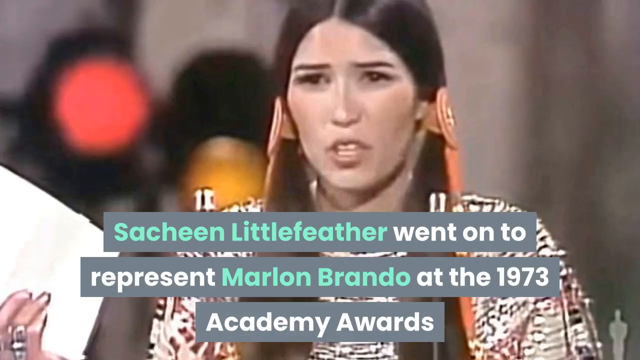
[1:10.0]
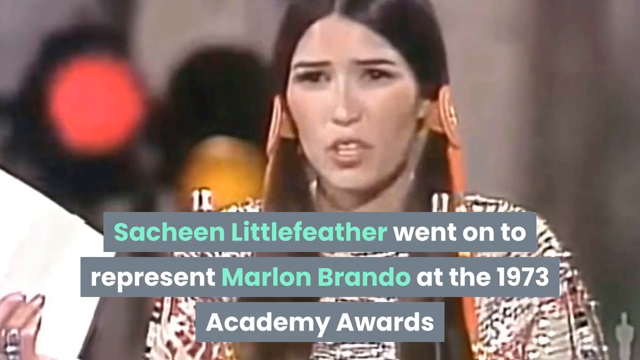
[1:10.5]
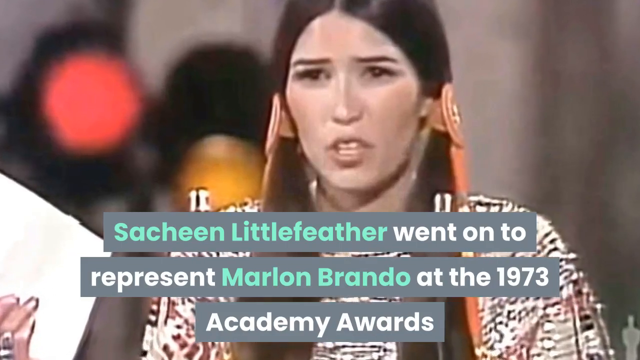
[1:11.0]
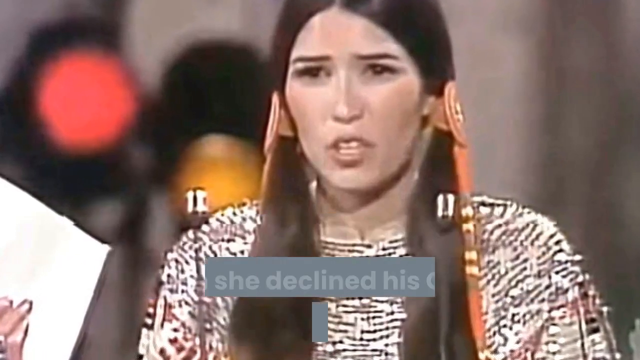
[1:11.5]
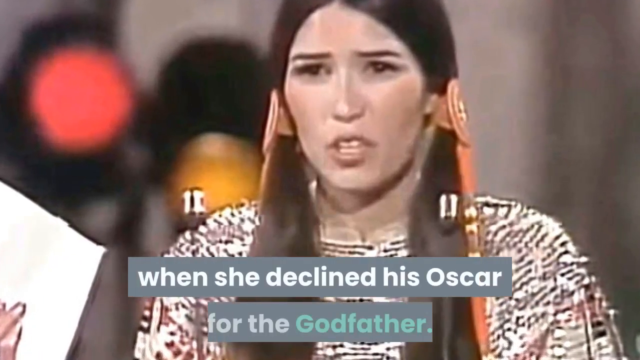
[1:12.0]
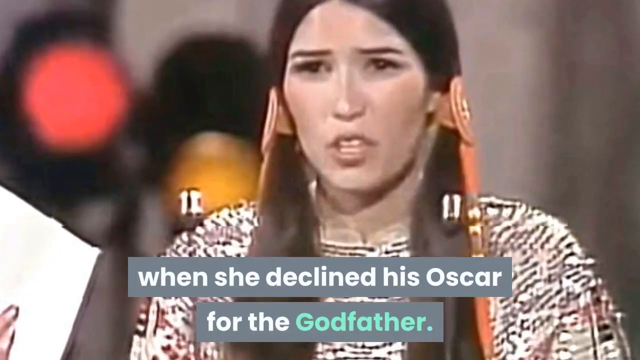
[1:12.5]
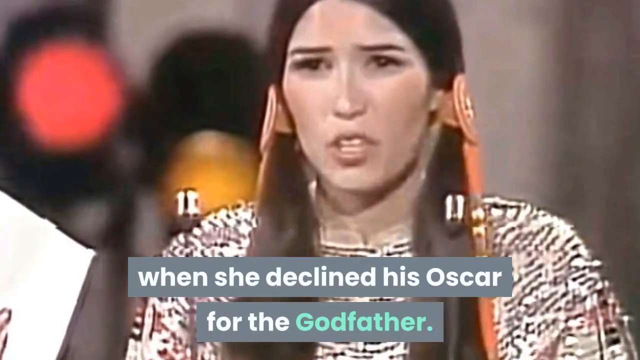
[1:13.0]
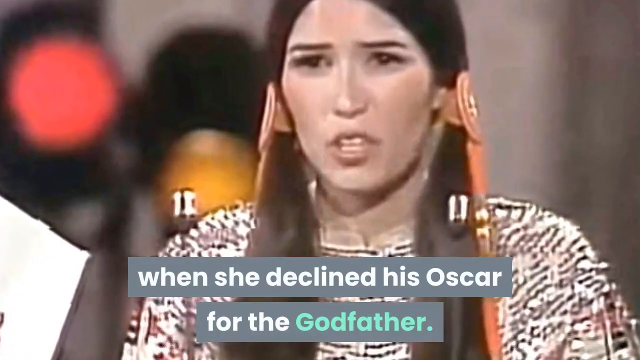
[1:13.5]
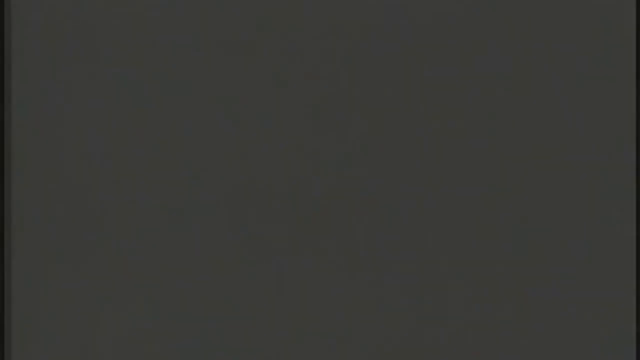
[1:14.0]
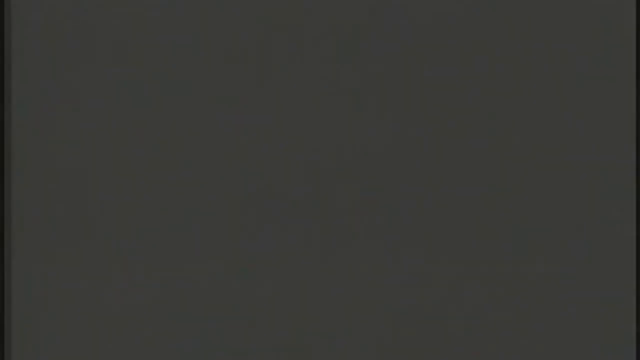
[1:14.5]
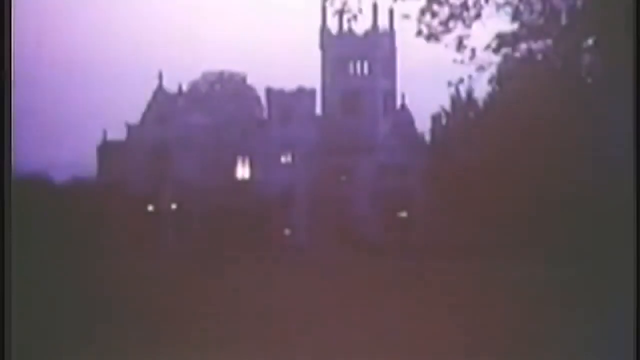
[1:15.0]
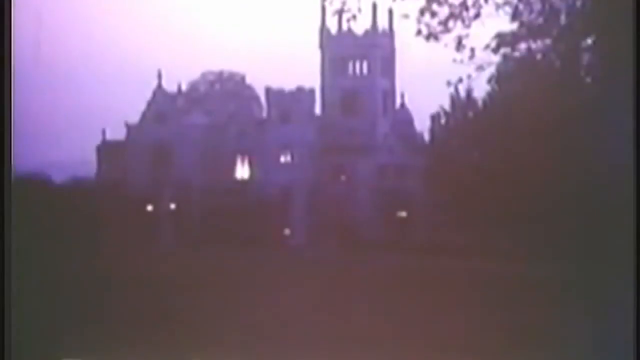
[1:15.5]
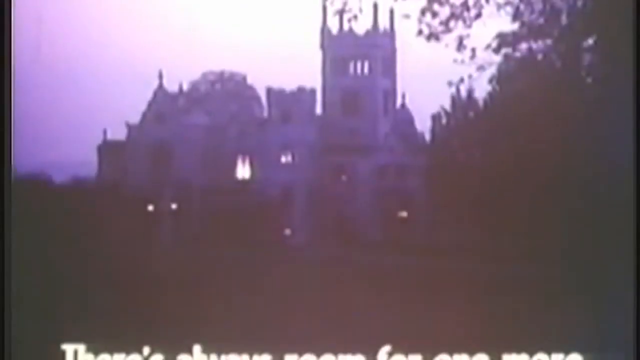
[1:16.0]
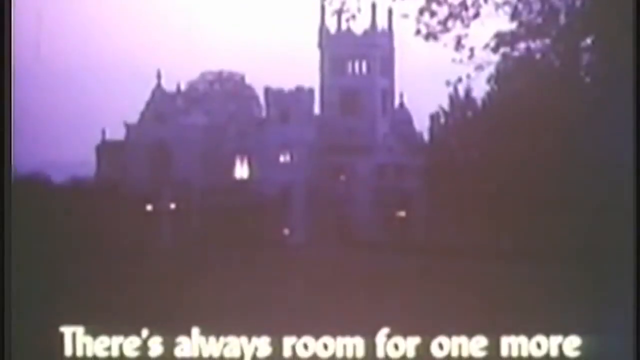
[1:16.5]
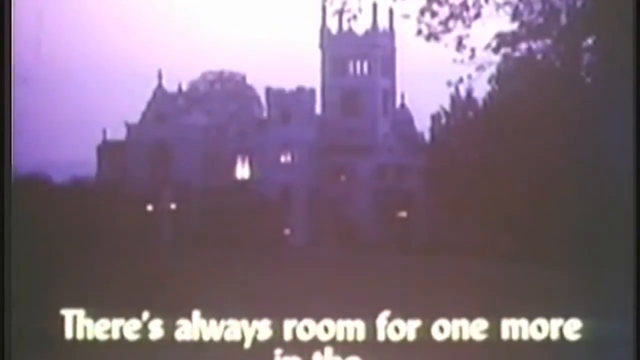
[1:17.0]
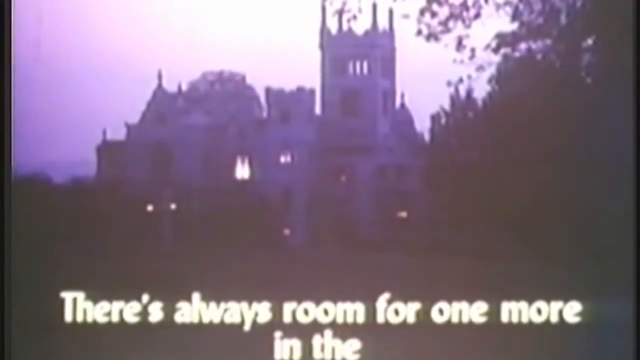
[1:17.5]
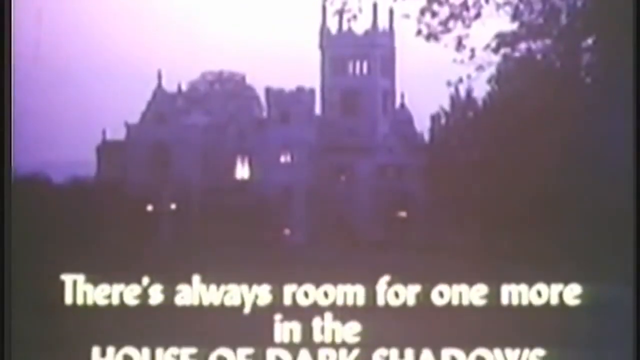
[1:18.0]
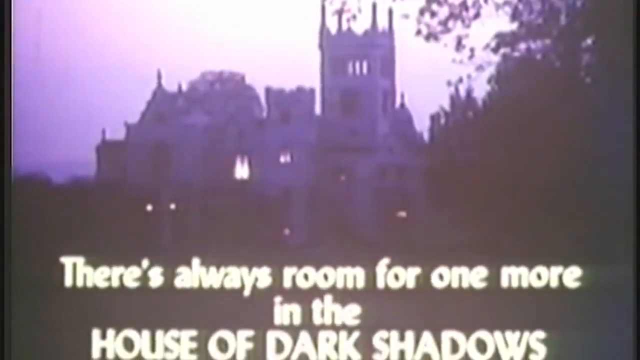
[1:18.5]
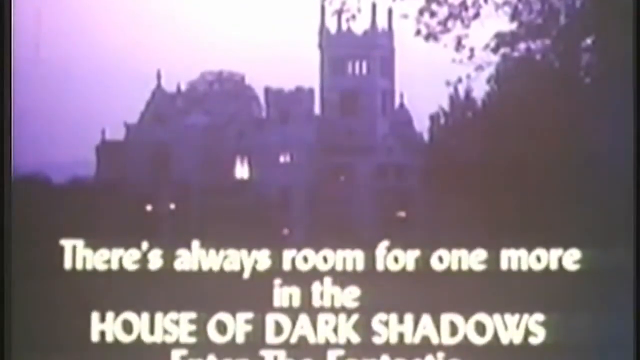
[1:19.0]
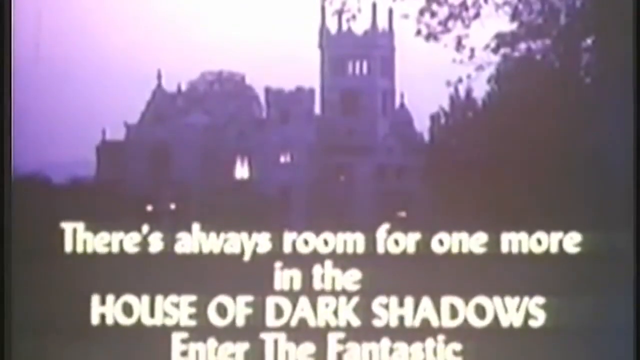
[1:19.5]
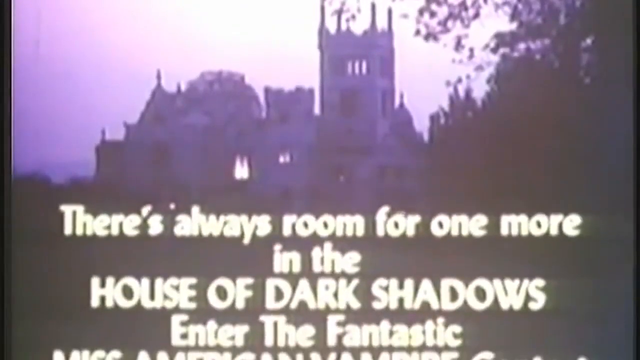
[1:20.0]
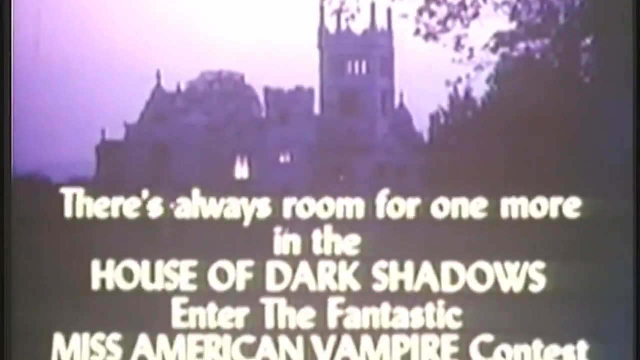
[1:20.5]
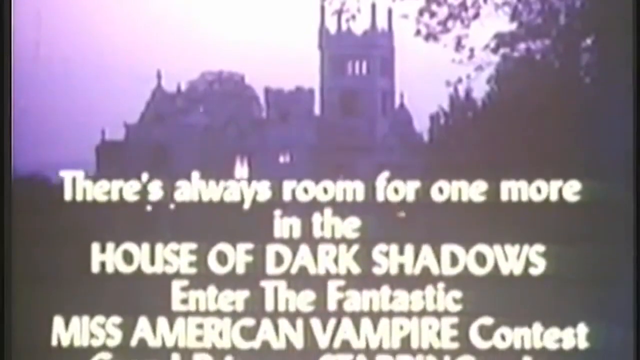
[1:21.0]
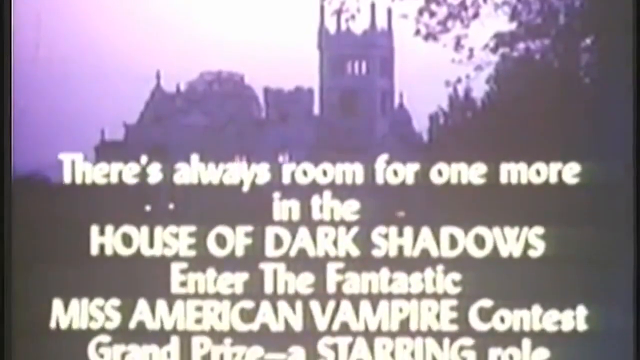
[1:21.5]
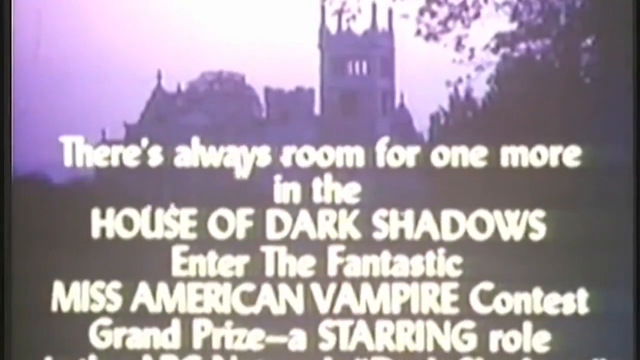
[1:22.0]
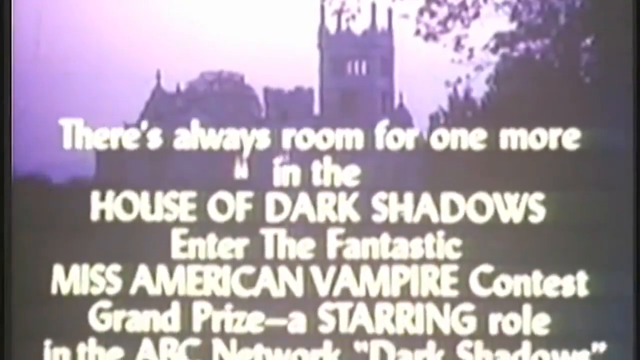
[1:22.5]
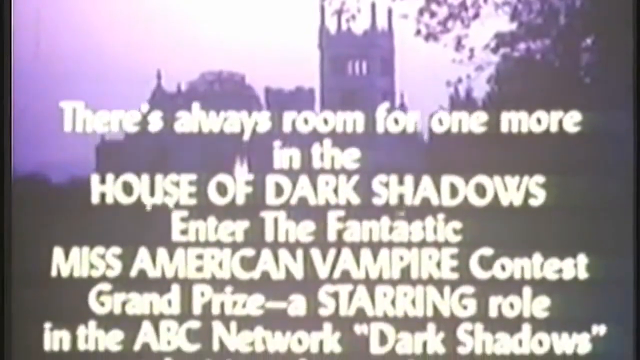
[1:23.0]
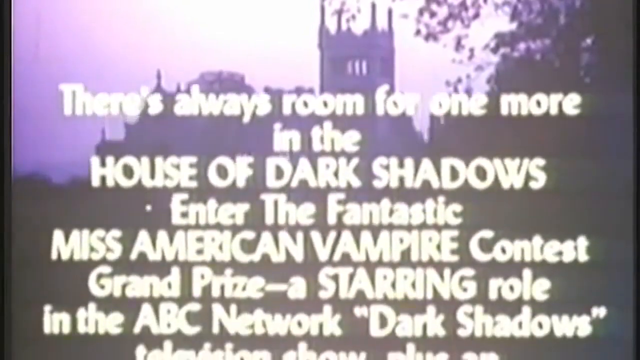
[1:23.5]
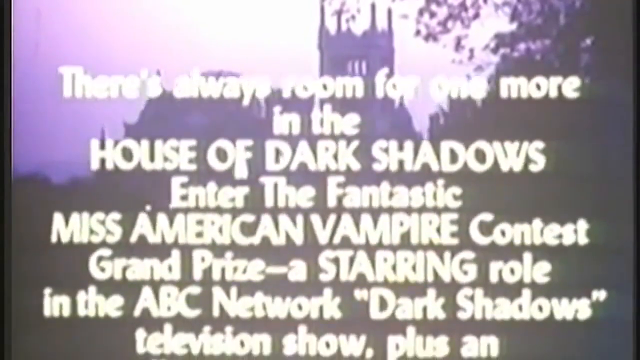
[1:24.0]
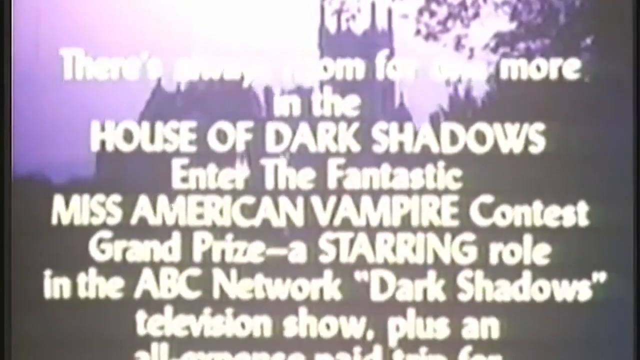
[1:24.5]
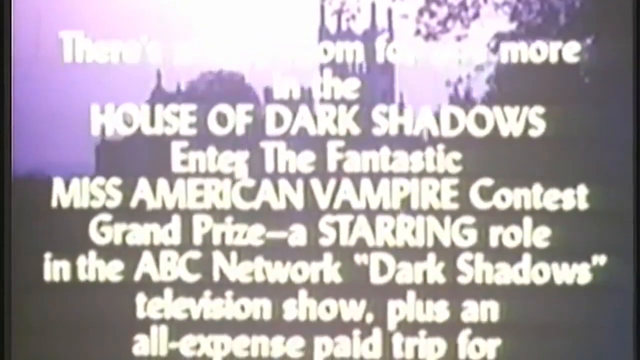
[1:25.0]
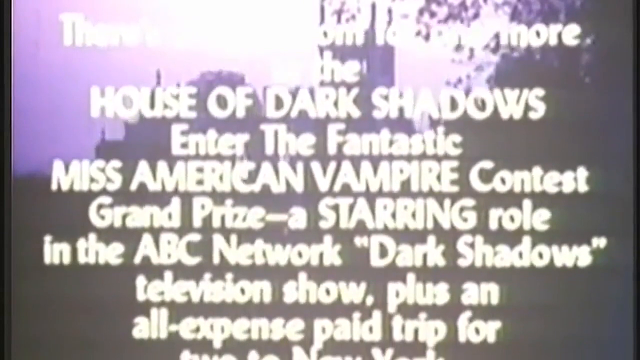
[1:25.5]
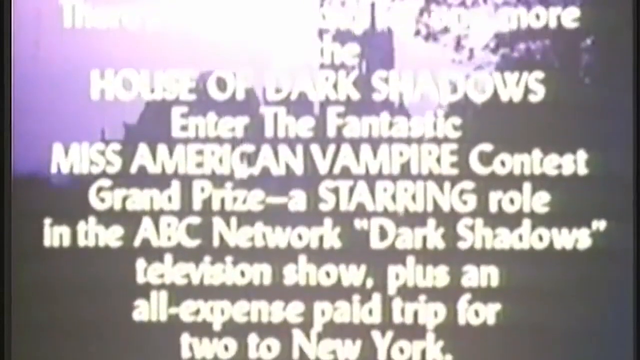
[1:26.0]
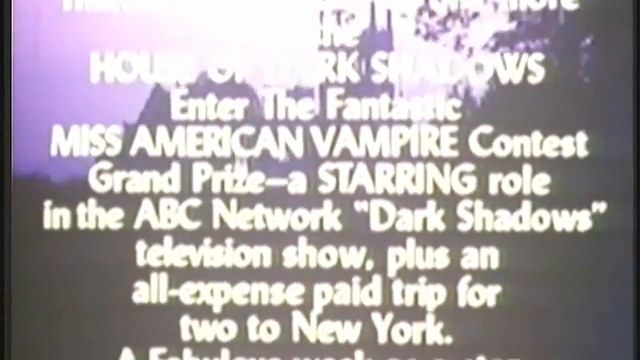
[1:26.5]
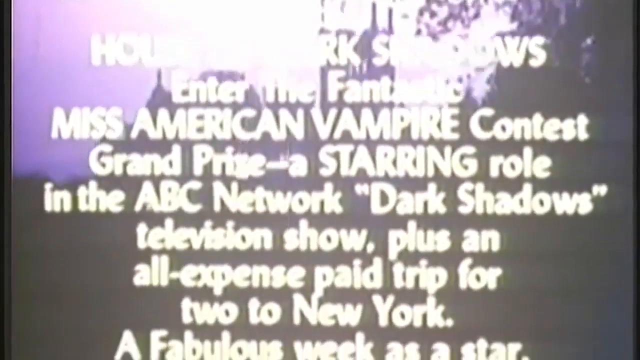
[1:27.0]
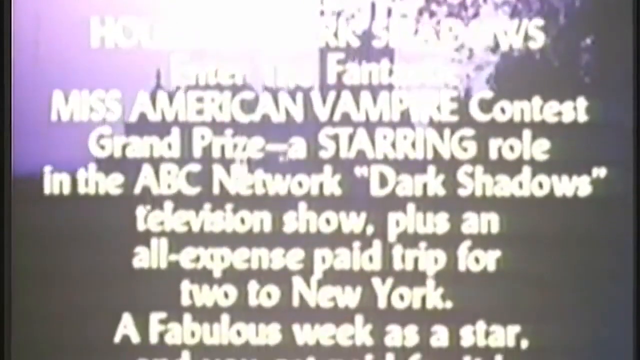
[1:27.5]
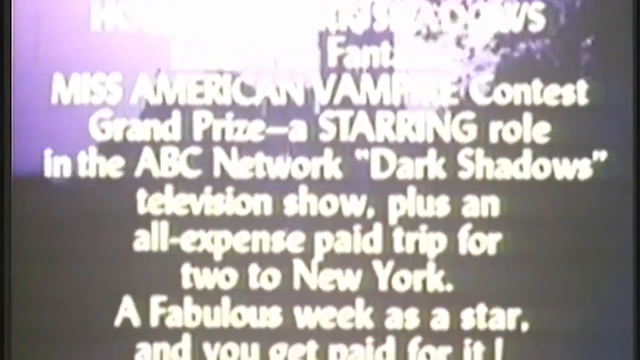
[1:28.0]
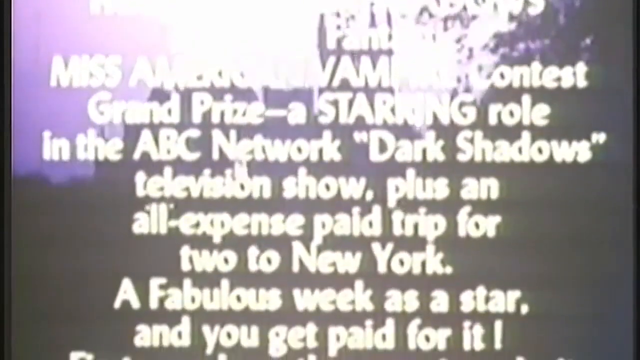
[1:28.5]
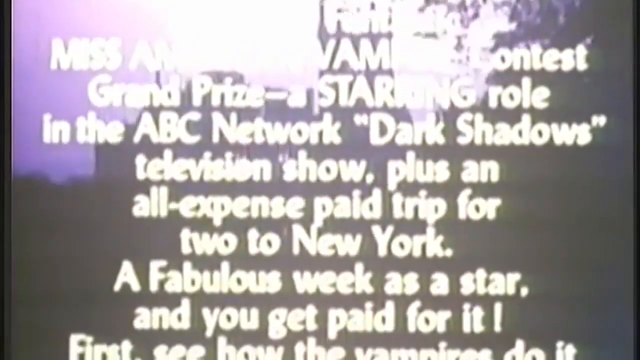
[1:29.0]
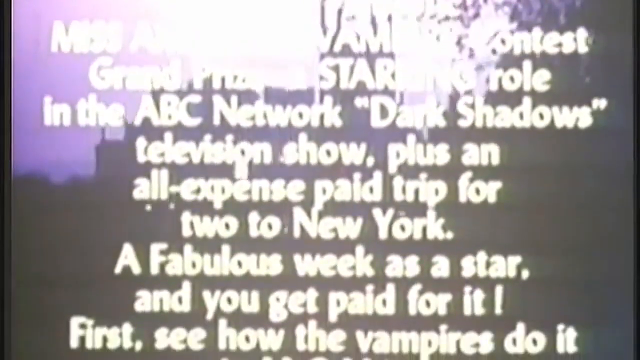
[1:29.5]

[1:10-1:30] More of the woman is shown, with text saying she declined the Oscar. An advertisement reads "There's always room for one more in the House of Dark Shadows. Enter the Fantastic Miss Vampire Contest. Grand Prize the starring role in the ABC network Dark Shadows television show, plus an all expense paid trip to New York for two."